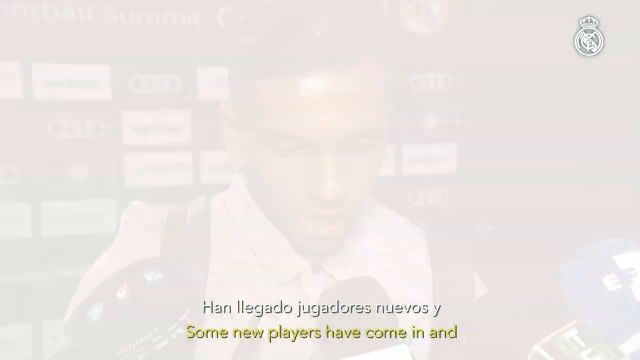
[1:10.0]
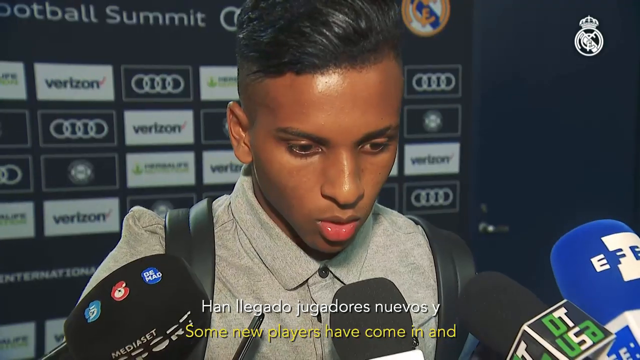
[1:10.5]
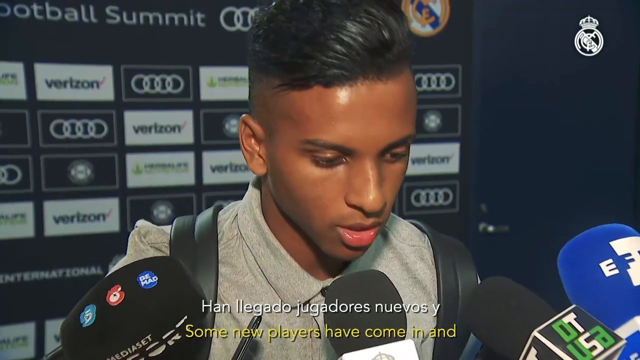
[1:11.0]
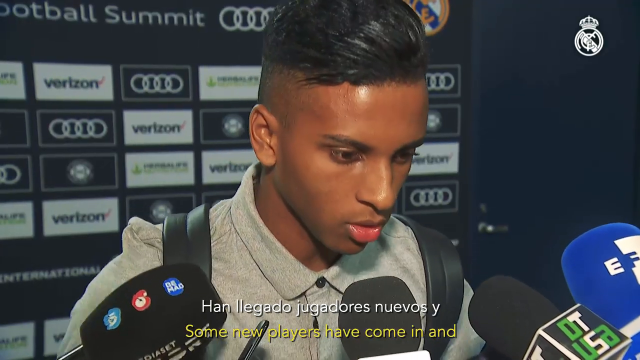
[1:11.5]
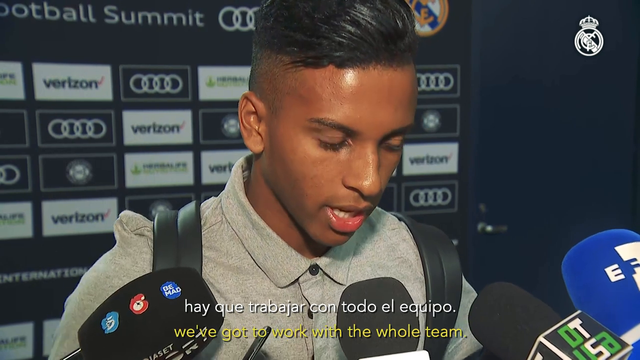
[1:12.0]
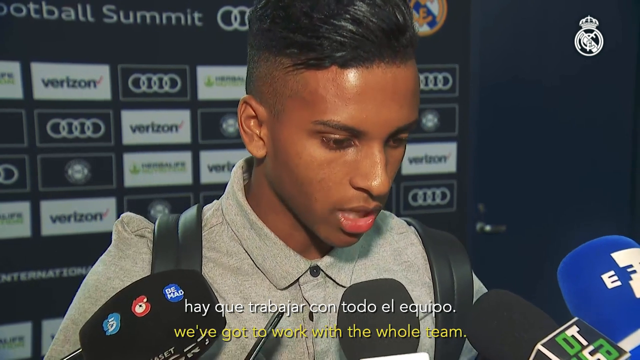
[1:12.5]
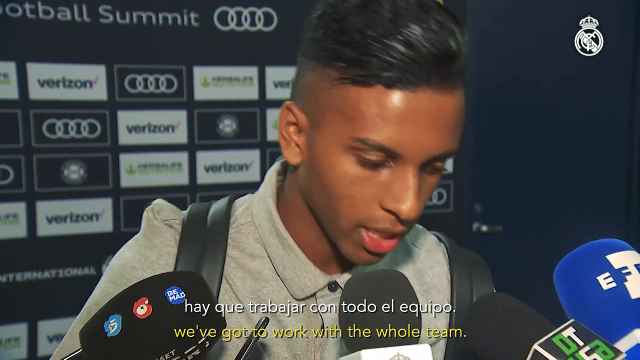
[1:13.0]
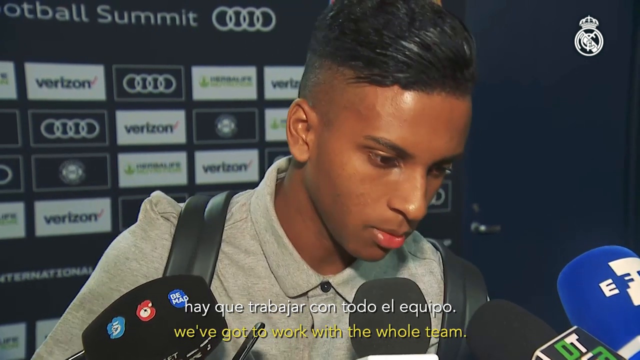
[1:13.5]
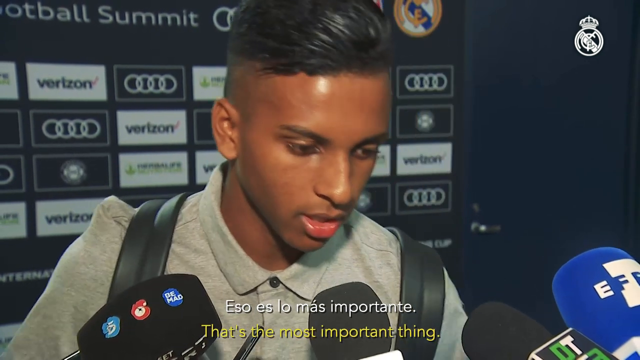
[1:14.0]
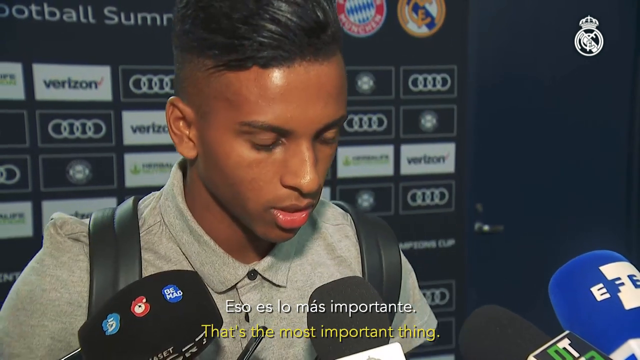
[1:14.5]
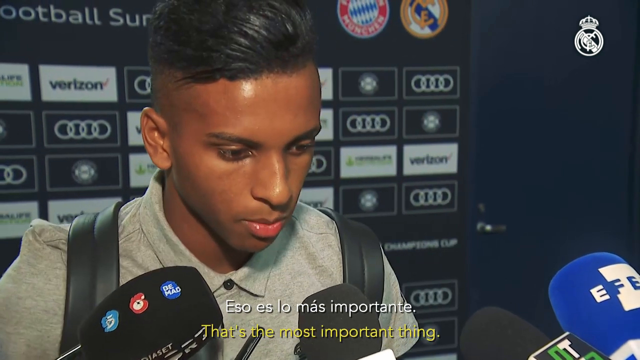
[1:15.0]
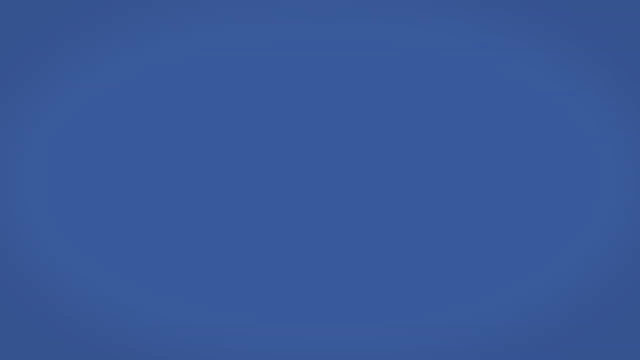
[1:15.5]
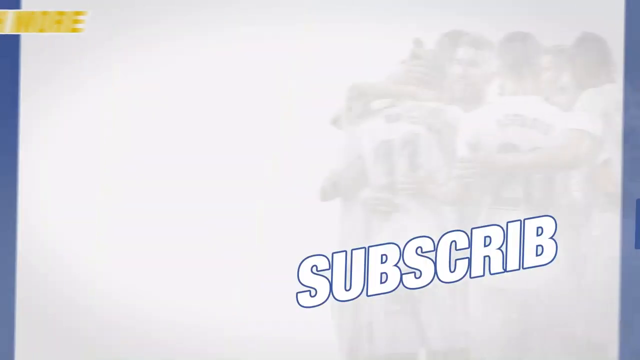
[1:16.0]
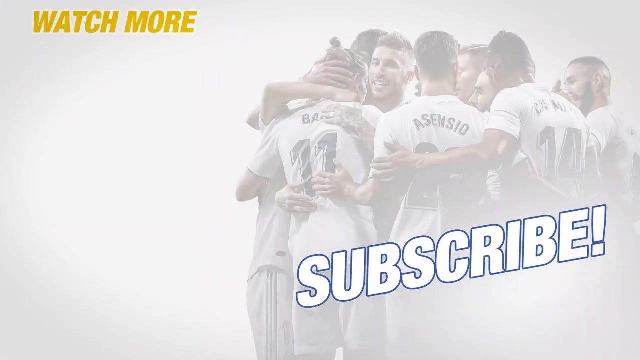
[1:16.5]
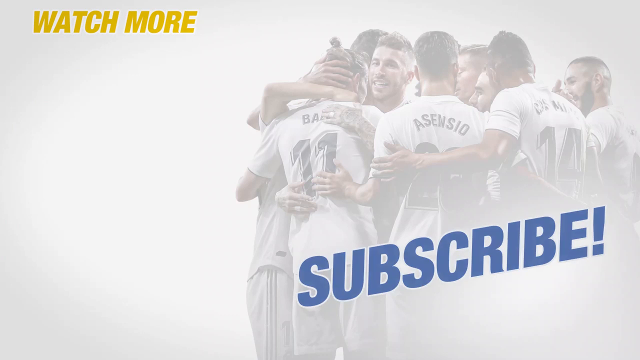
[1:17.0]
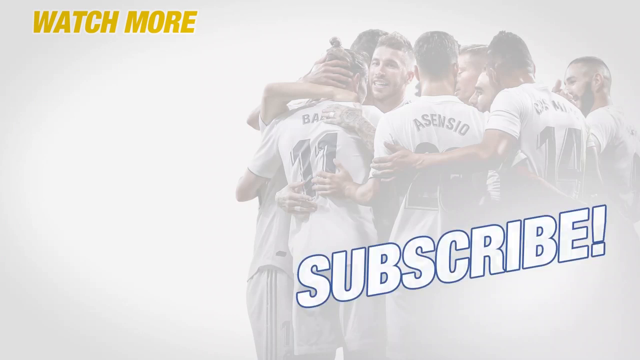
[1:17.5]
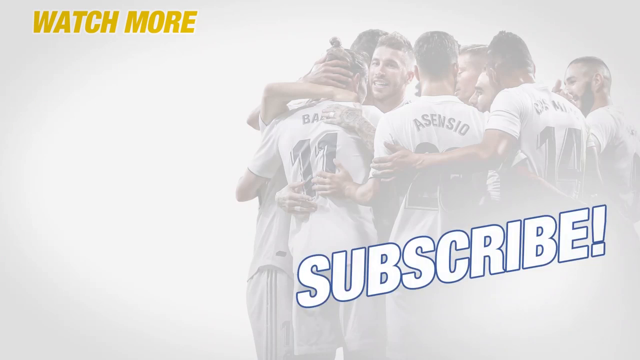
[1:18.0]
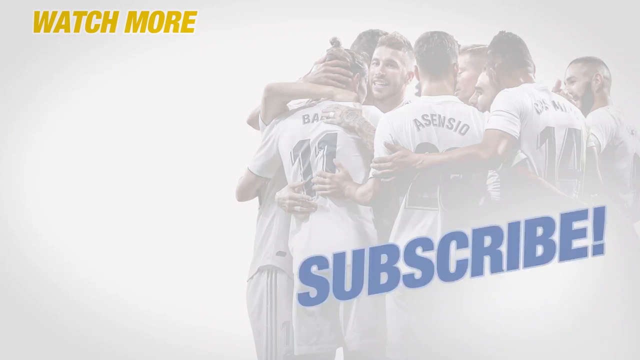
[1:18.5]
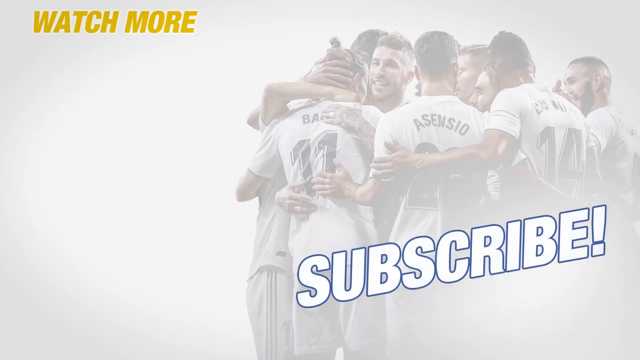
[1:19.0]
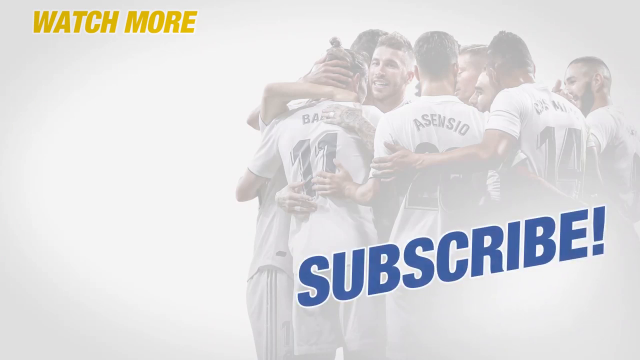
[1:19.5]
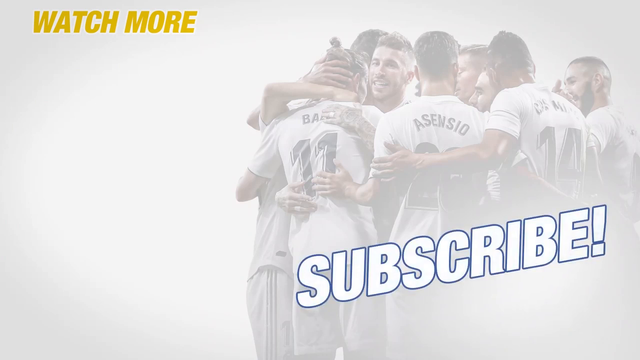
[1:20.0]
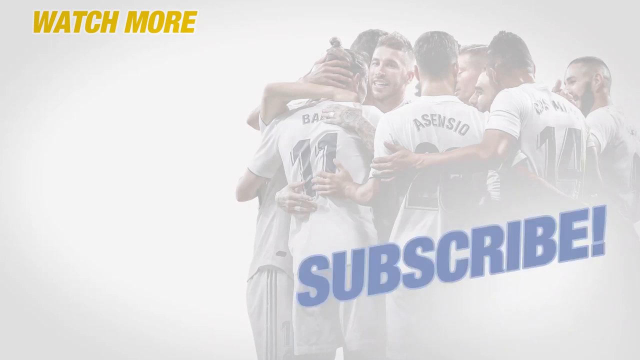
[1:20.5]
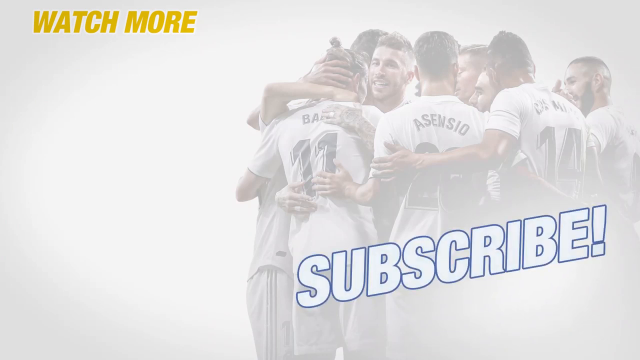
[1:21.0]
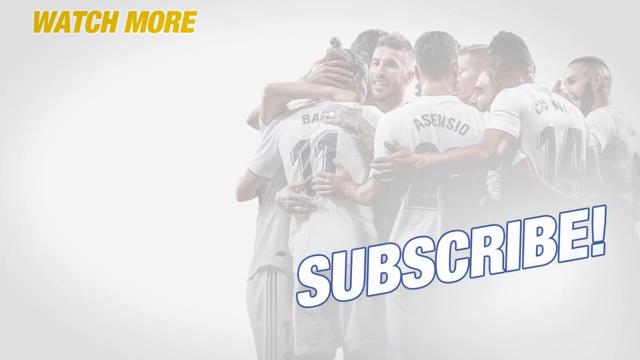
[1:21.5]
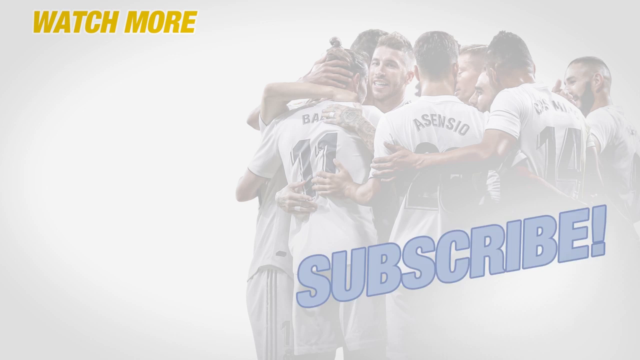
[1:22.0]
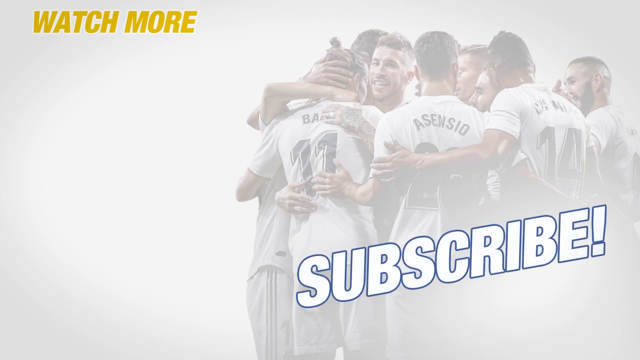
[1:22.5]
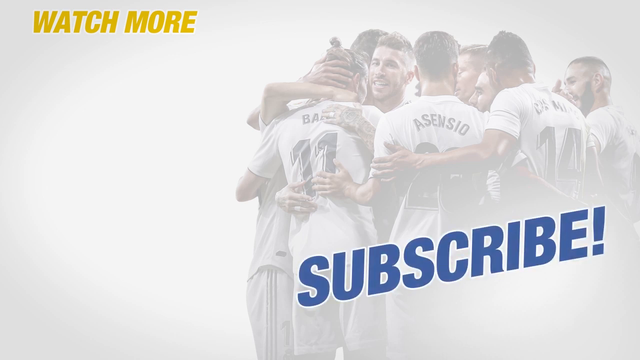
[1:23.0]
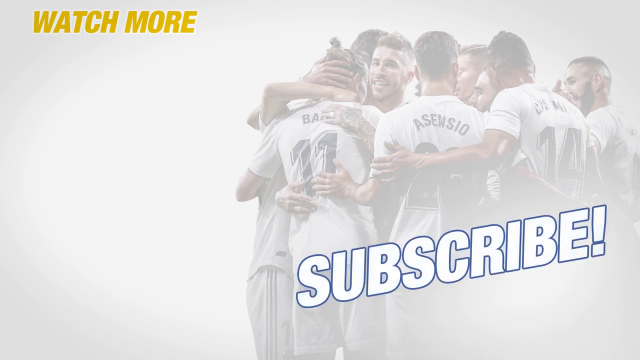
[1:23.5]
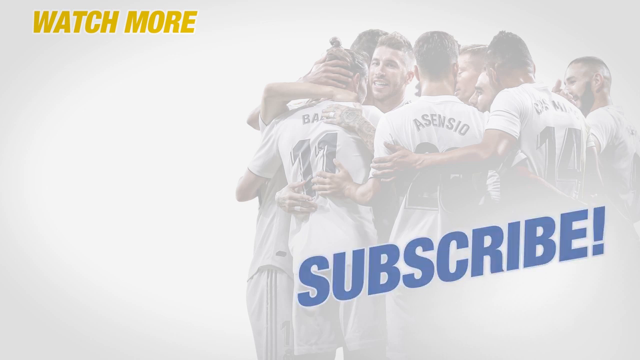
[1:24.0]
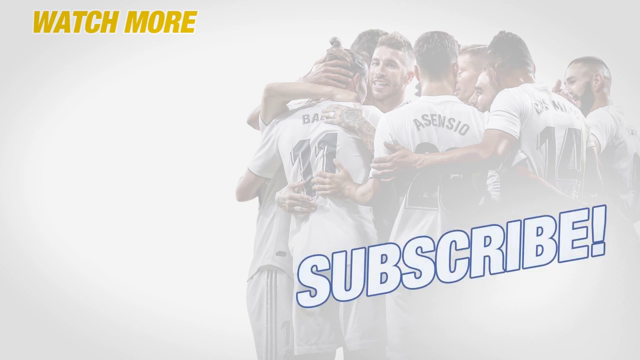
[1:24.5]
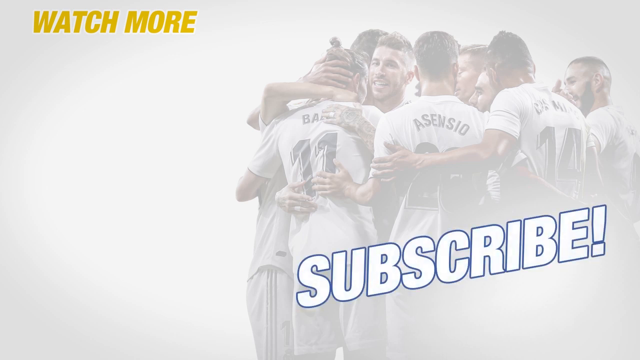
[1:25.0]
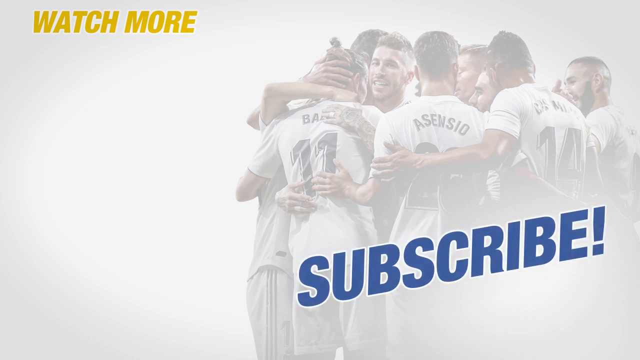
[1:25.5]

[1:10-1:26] The same player, Rodrygo, is interviewed in the same place from the same angles. He says some new players have come in and they have to work with the whole team, and that this is what is important. The video ends with an image of what appears to be the entire team huddled up with their arms around each other in celebration against a white background; the name "Asensio" can be made out.